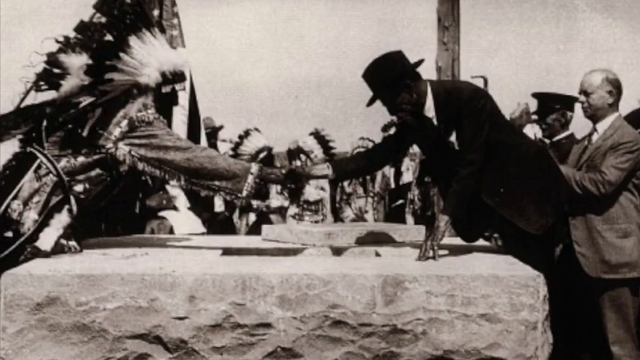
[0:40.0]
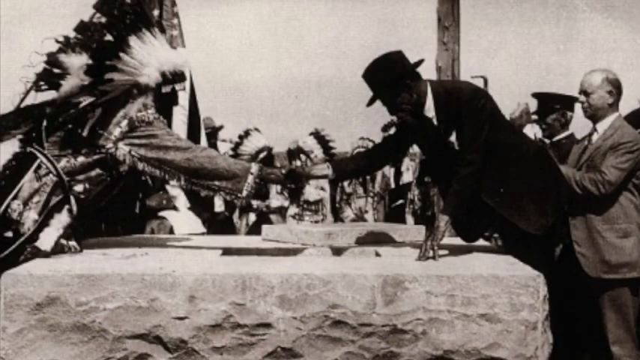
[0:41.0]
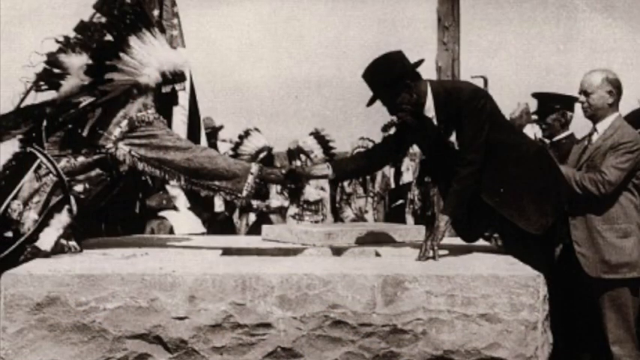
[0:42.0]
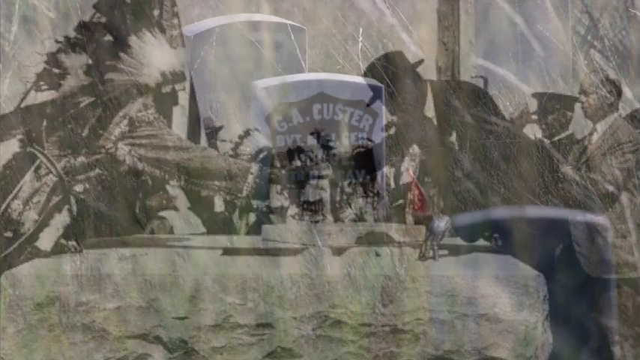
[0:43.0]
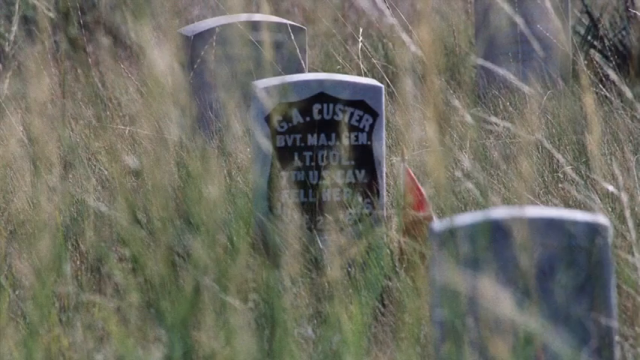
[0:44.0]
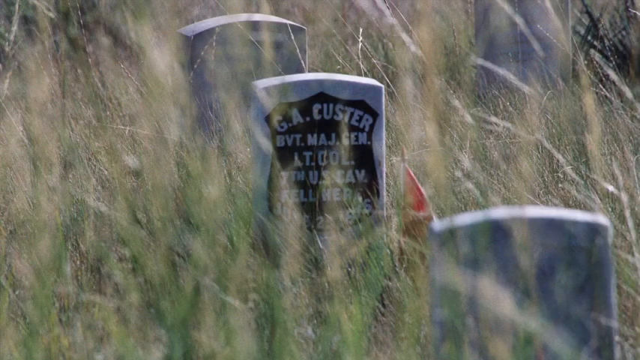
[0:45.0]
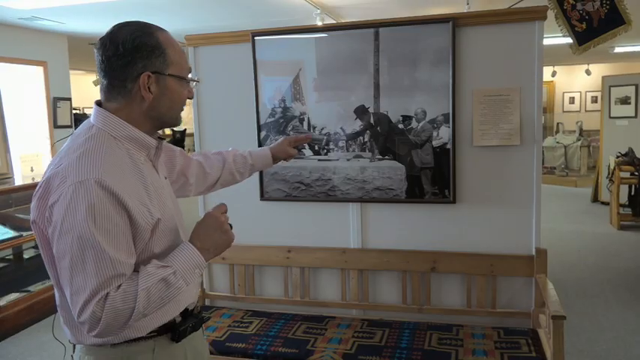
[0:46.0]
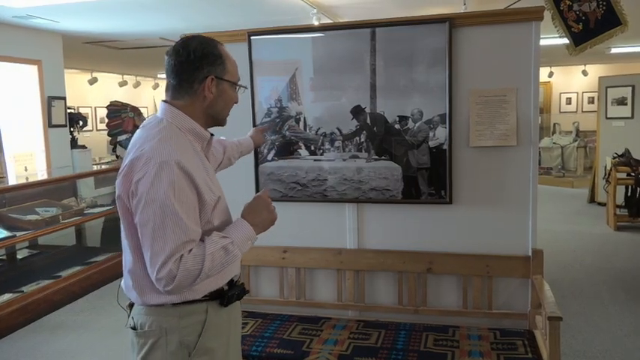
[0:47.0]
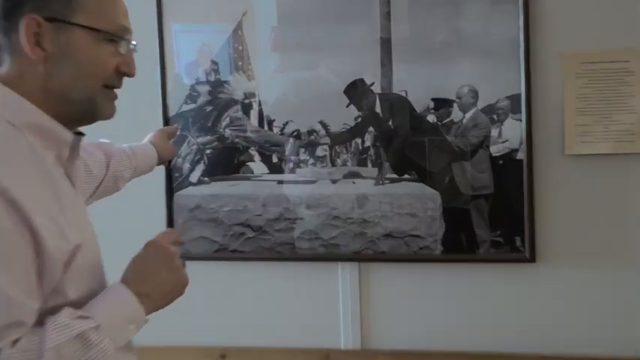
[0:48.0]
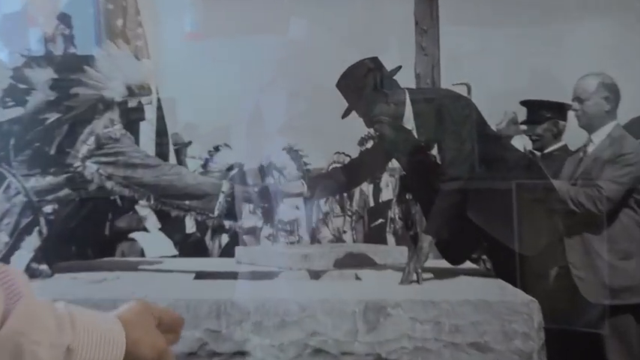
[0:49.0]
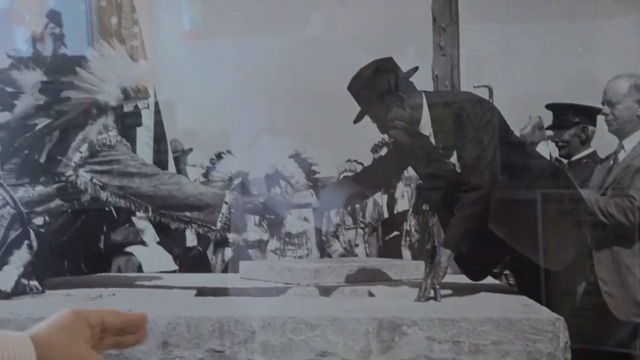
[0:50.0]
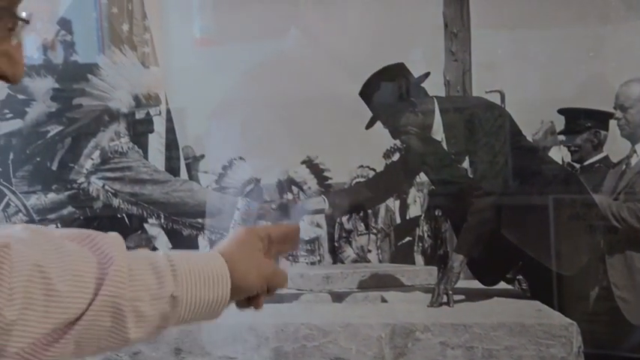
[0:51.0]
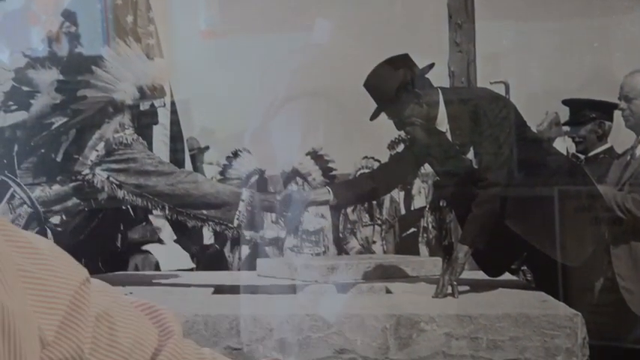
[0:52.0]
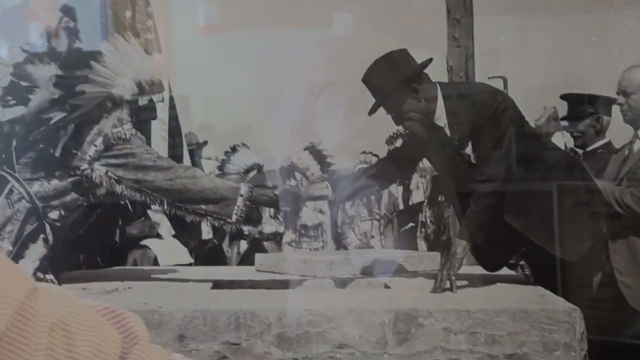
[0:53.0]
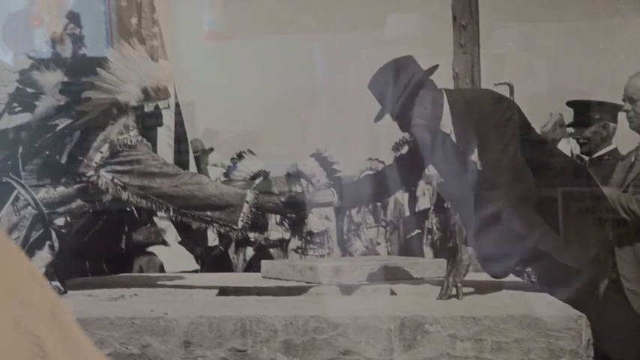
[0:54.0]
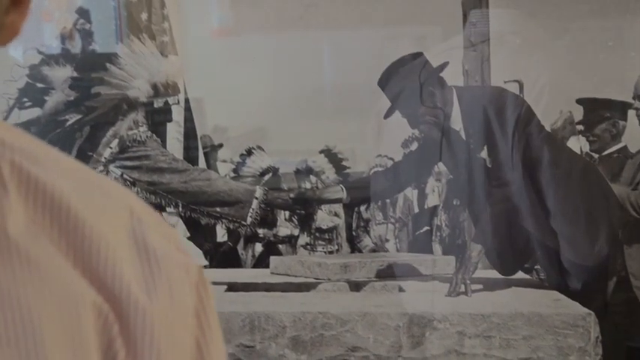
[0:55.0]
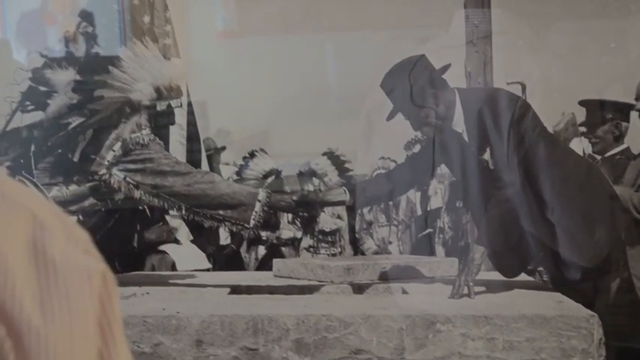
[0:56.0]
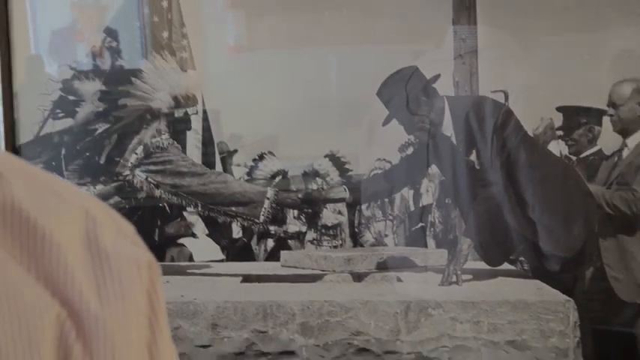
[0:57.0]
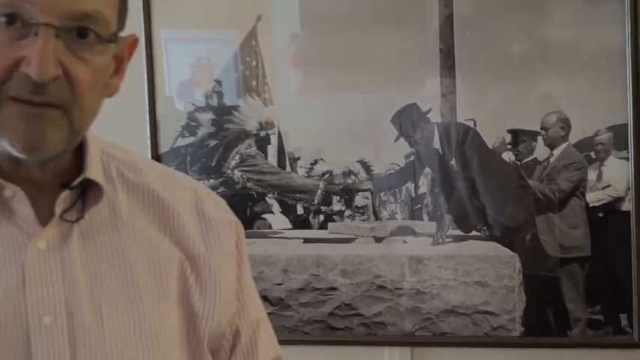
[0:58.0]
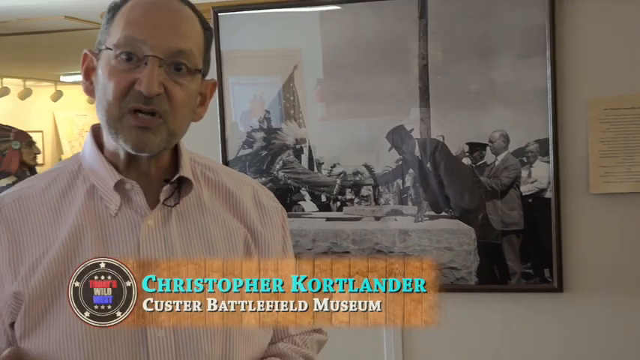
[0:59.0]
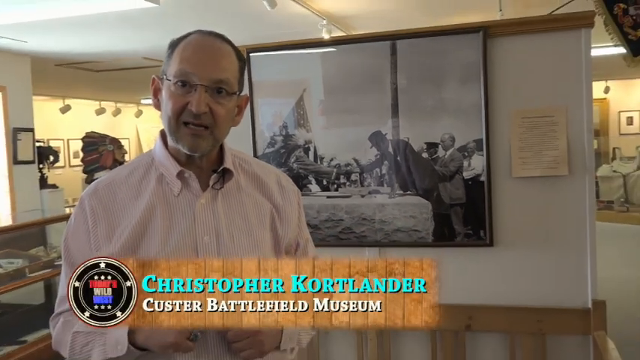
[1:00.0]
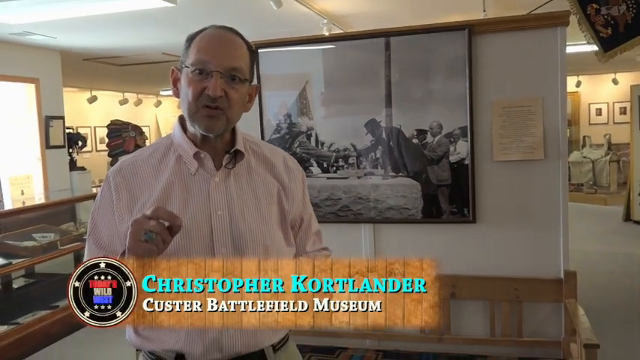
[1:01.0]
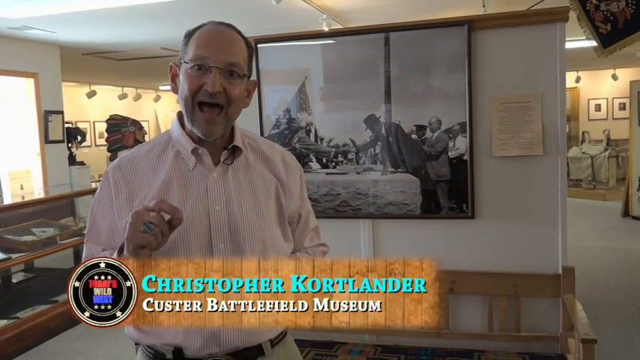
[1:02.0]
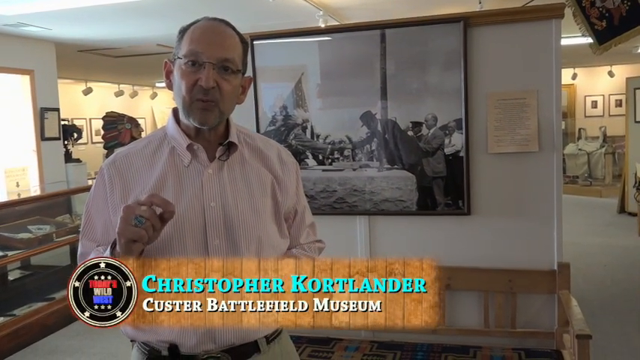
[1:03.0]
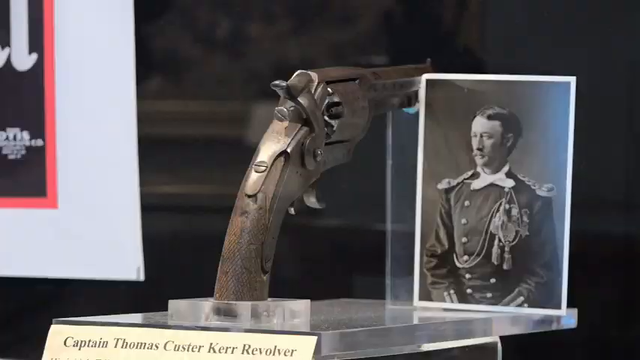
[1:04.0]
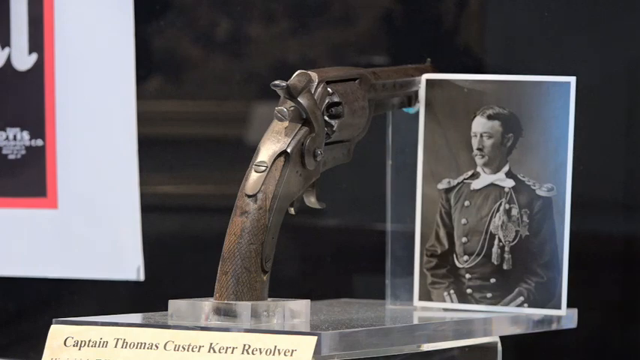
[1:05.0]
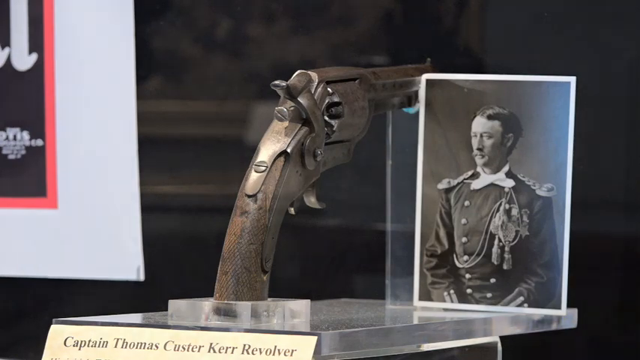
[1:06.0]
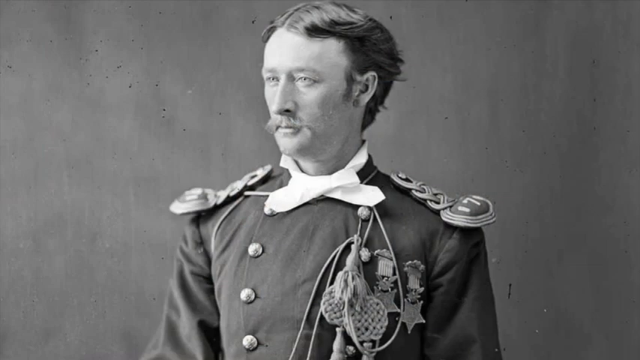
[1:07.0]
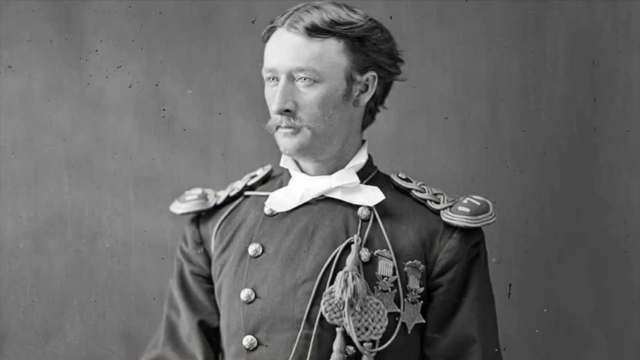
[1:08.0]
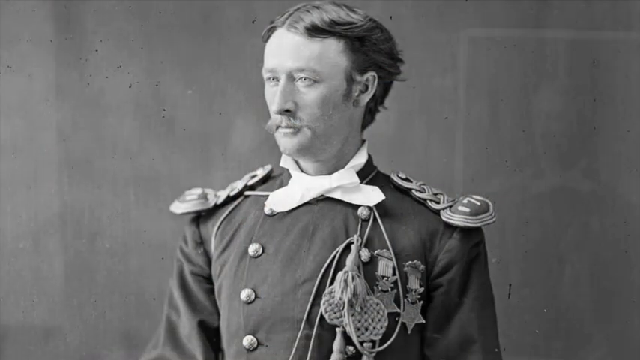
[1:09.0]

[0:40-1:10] The black and white picture of the Native American man and the man across from him shaking hands is still shown. Next comes a funeral tombstone with lettering that includes "GA Custer" and "seventh U.S. CAV". The view then pans out to the older man in the pink shirt and glasses from the start of the video, standing in front of the black and white picture of the two men shaking hands. He points toward it as he talks to the camera, and some reflection from the glass on the picture frame is visible. The camera zooms out on the man, and text in the lower left-hand corner gives his name, "Christopher Courtlander", from the "Custer Battlefield Museum".